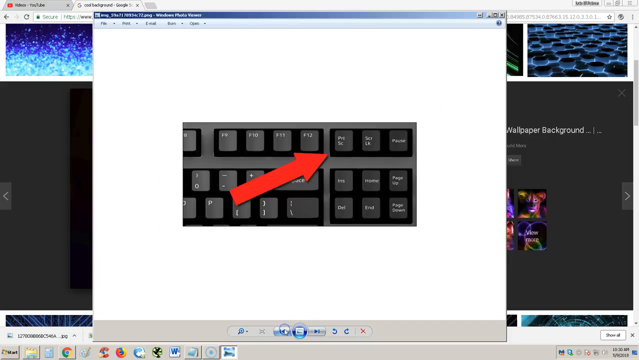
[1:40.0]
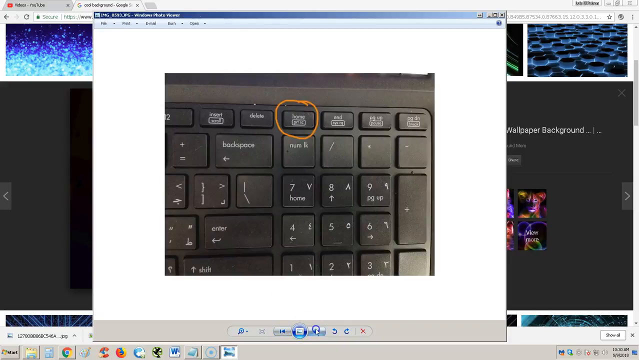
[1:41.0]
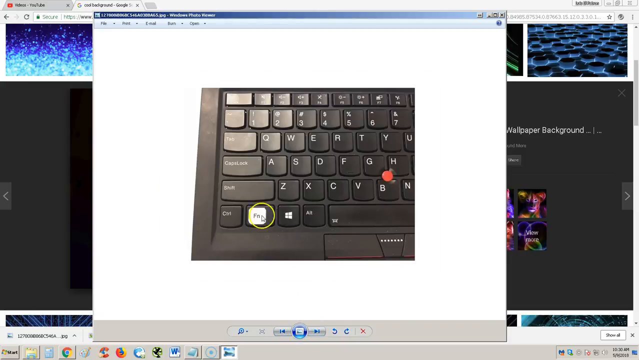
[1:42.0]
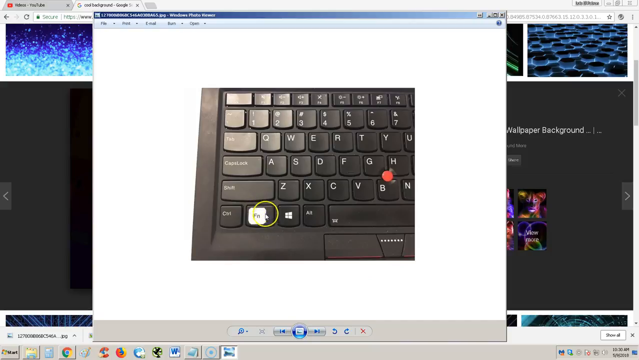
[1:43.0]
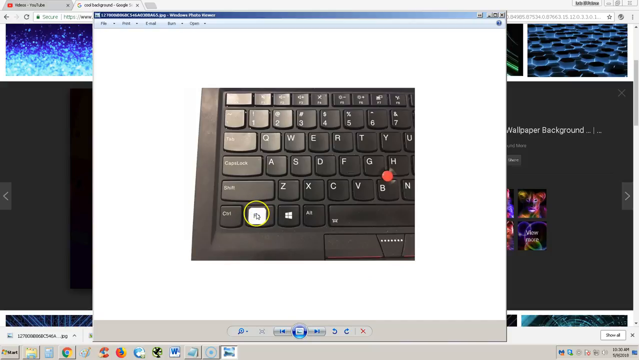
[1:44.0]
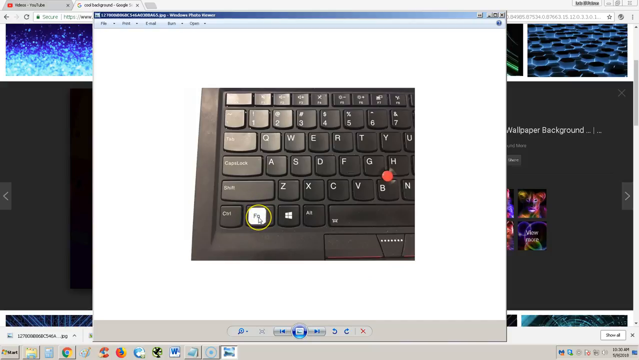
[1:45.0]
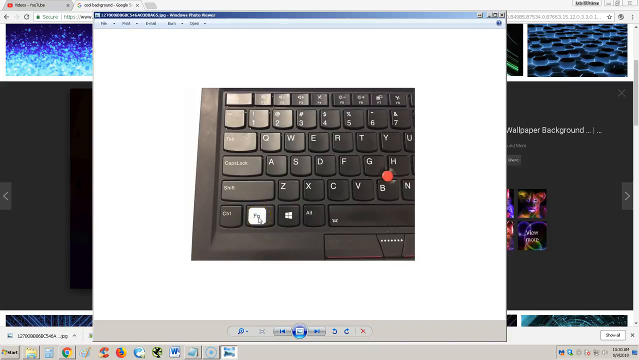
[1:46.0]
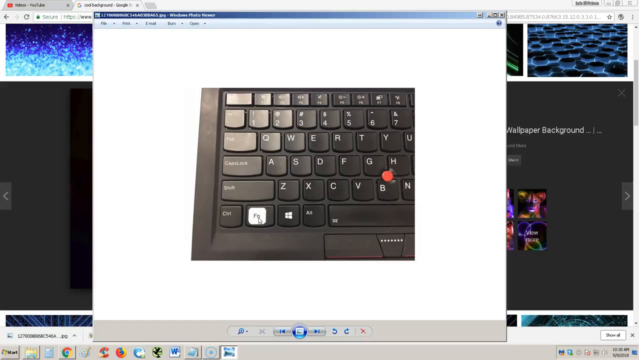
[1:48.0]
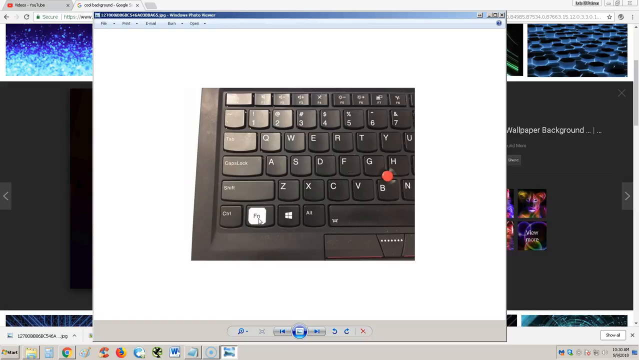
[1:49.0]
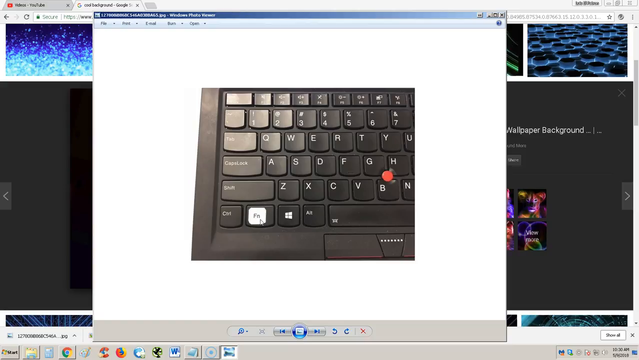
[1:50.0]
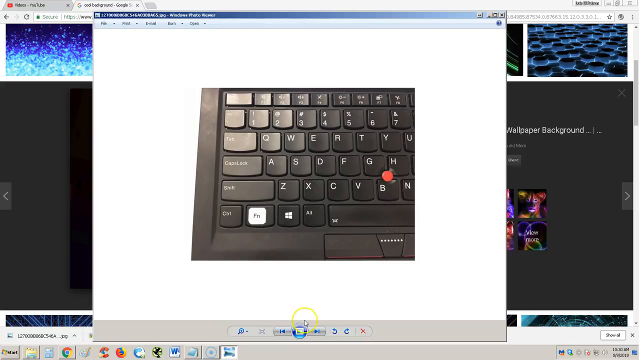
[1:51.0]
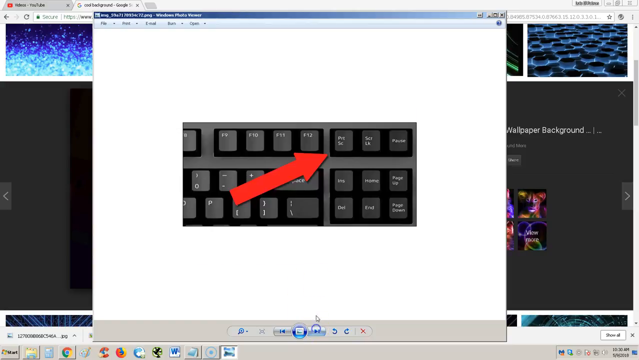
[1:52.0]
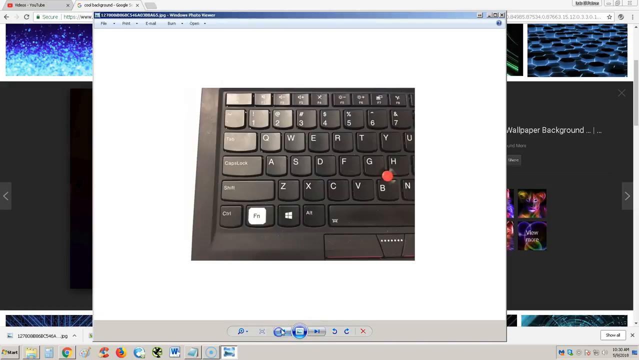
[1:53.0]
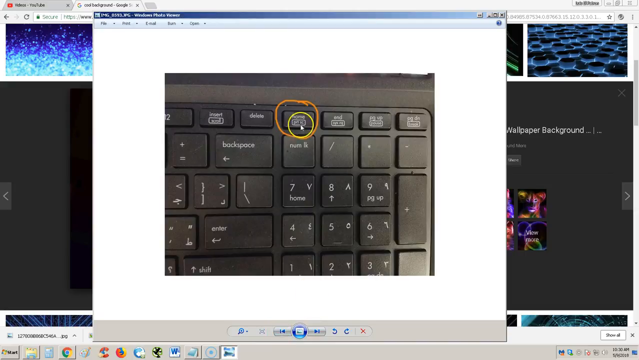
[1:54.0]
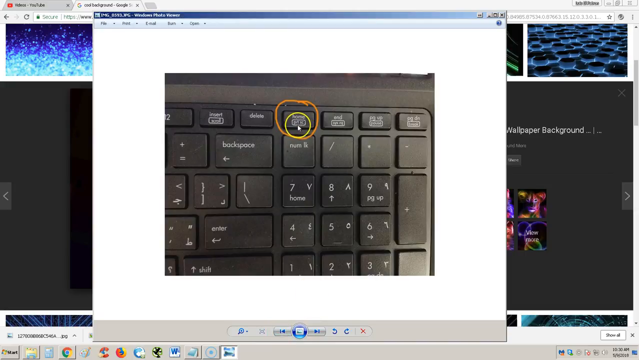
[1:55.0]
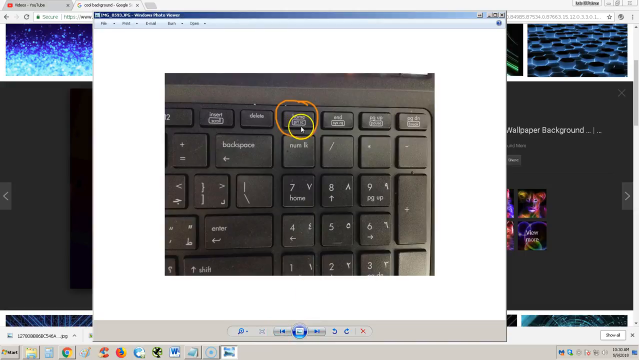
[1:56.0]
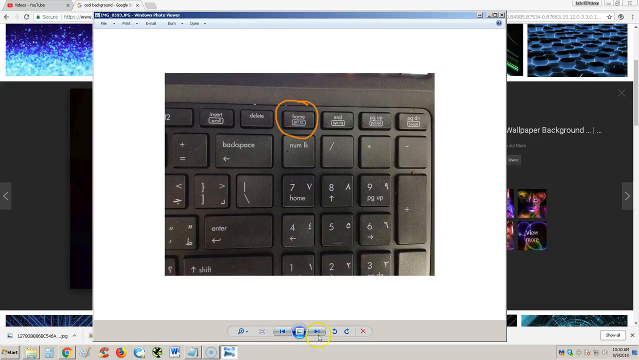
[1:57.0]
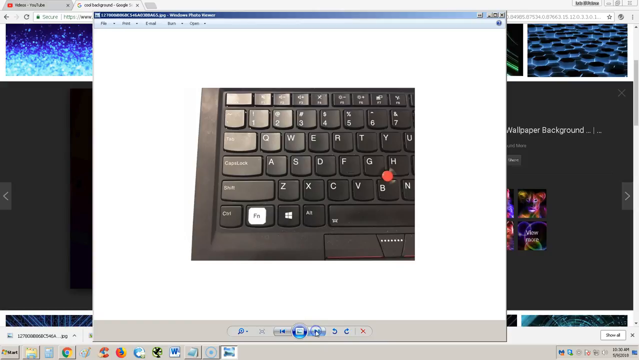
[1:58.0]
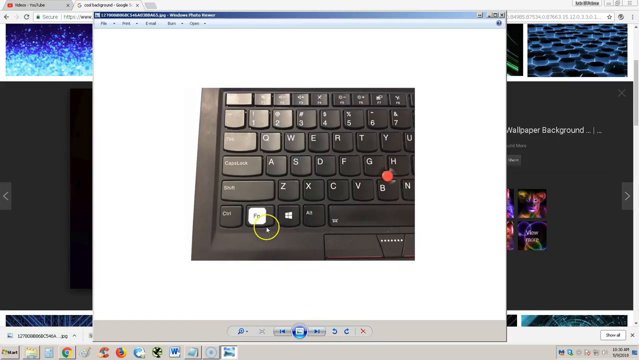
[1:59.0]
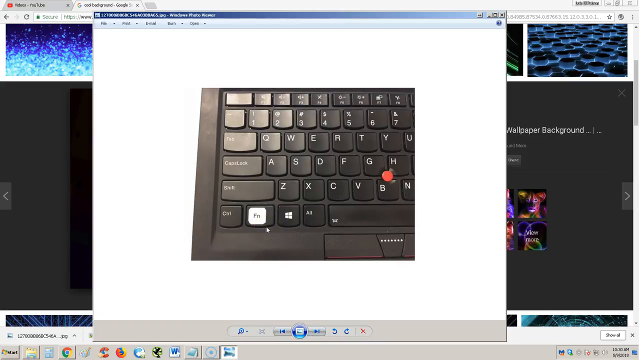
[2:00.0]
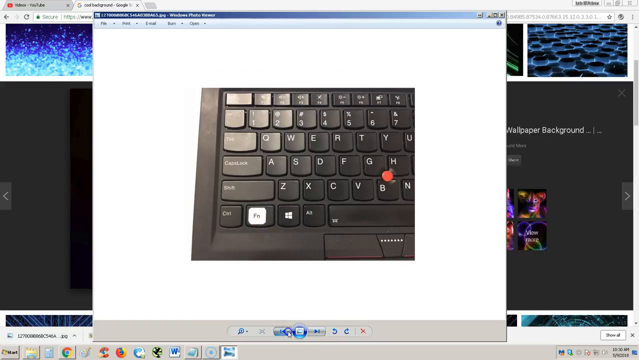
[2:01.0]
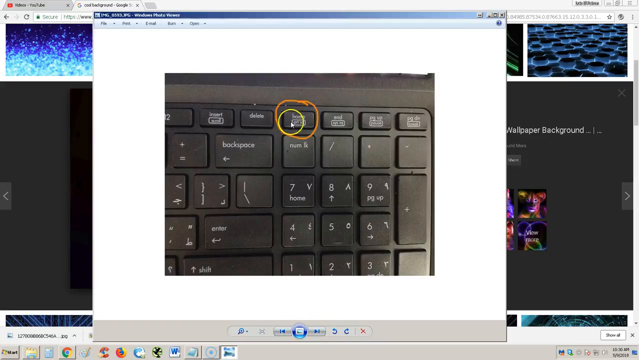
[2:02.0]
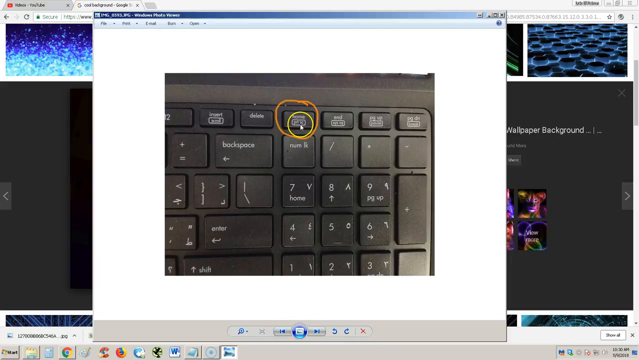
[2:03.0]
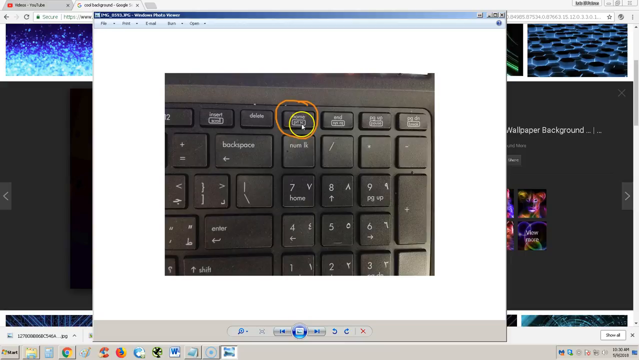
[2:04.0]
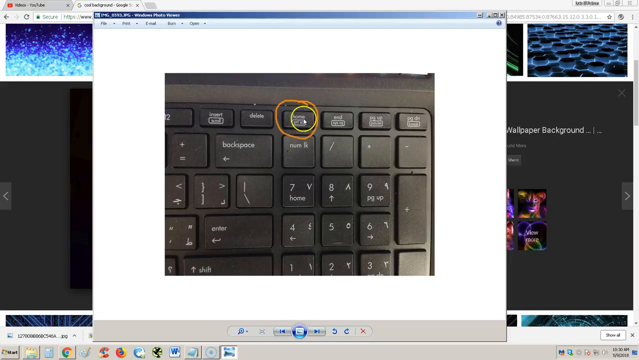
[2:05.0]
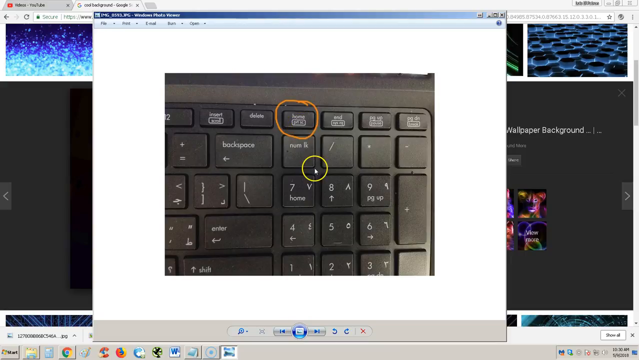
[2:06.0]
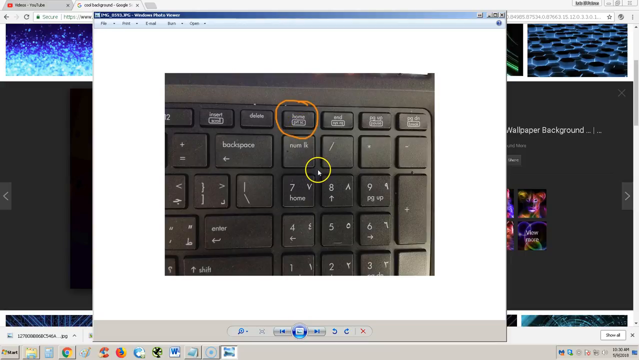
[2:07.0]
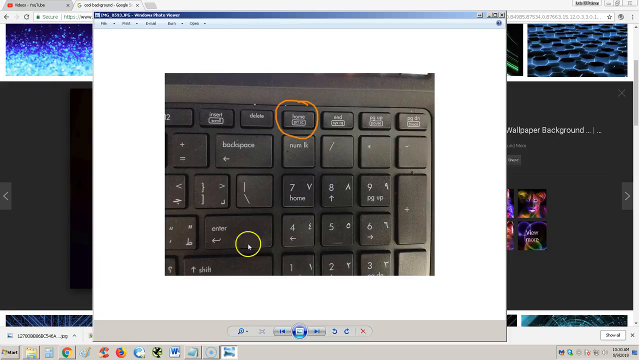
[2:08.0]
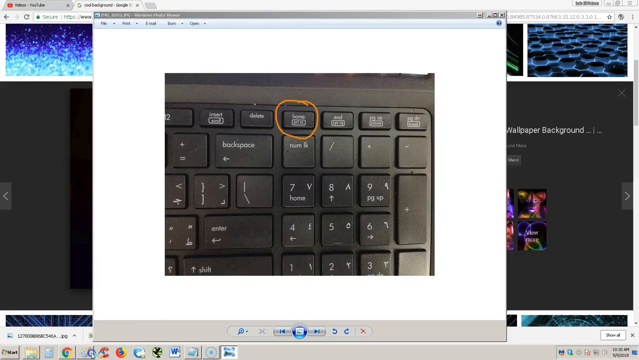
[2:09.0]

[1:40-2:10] The left side of the keyboard image appears, with the FN button in white. The cursor moves over it, circles around it several times, and the arrow stays pointed right at its center; the yellow circle is gone. The yellow circle appears again as the cursor slides back to the menu options and clicks the right blue arrow. The cursor slides back up, then back down, and clicks the left arrow twice, returning to the image with an orange circle around a keyboard button. There is a word above a rectangle that has a word in it, and the cursor circles there several times. The cursor scrolls down and clicks the forward button, returning to the Fn button in white, moves to the corner, then scrolls back and clicks the back button. It points to the button in the orange circle, goes in circles several times, slides down over the eight, then over the four, and then slides off to the lower left corner. The Paint window opens, completely blank.